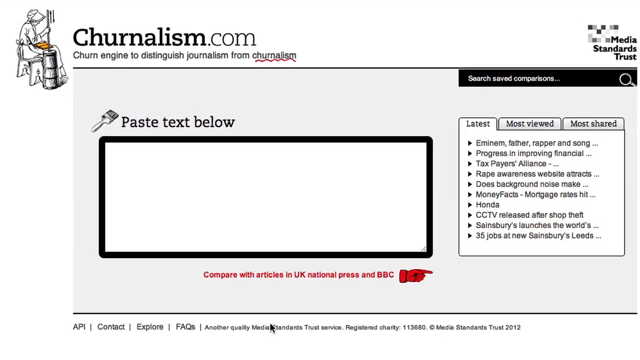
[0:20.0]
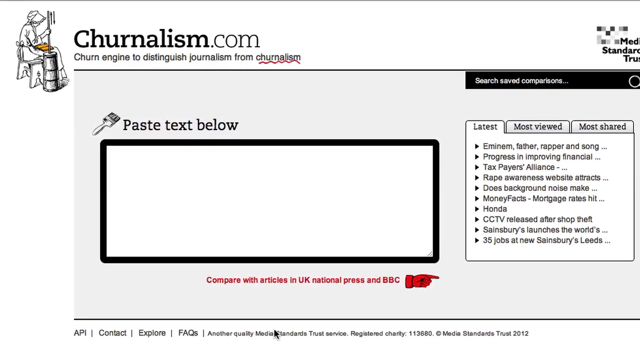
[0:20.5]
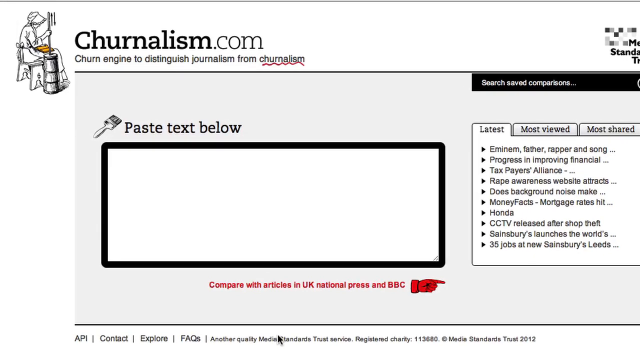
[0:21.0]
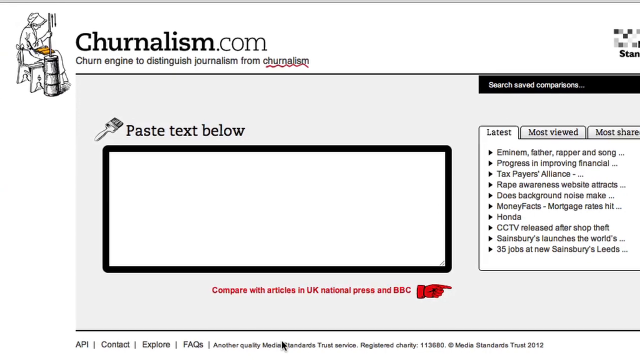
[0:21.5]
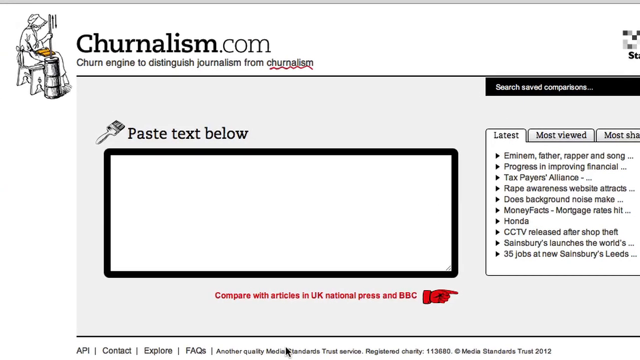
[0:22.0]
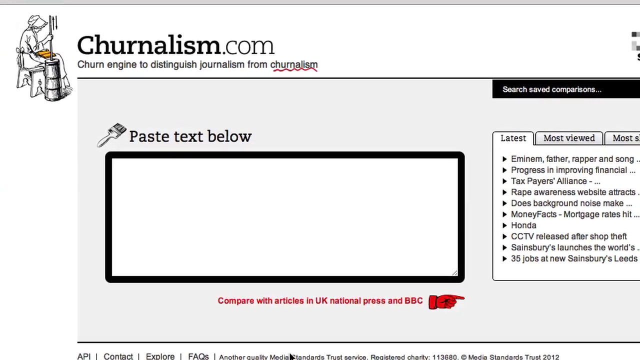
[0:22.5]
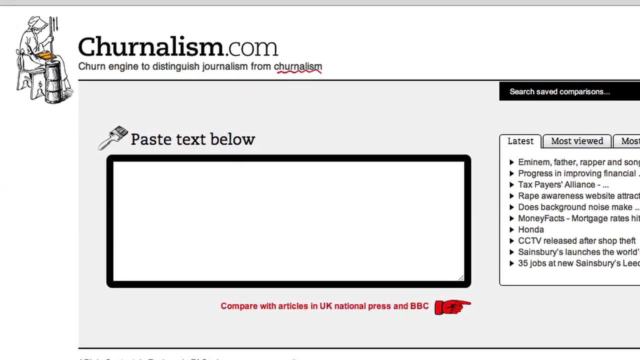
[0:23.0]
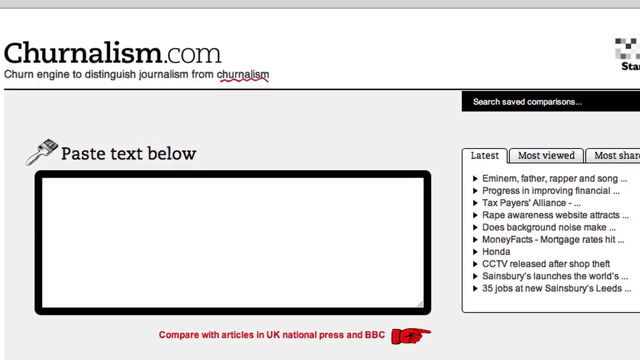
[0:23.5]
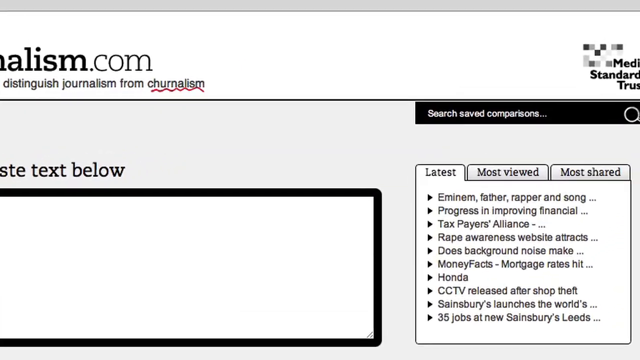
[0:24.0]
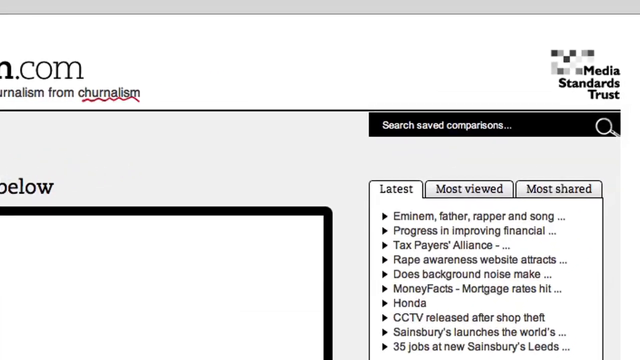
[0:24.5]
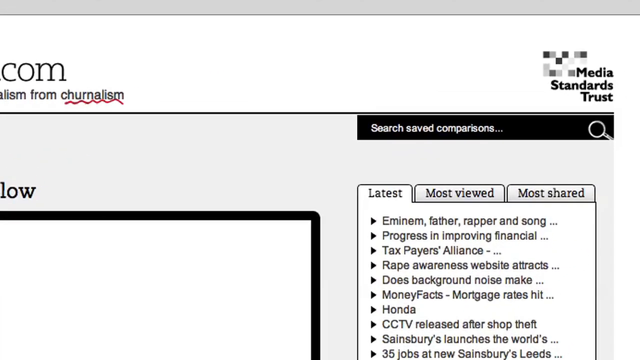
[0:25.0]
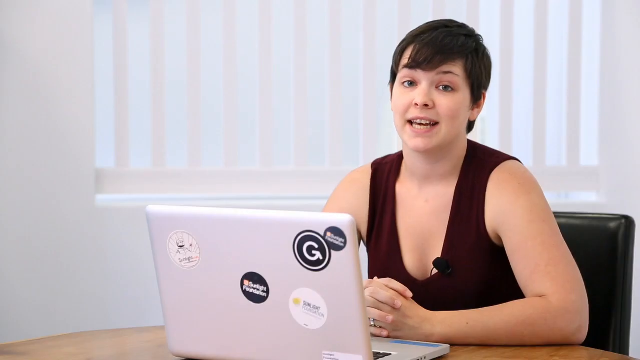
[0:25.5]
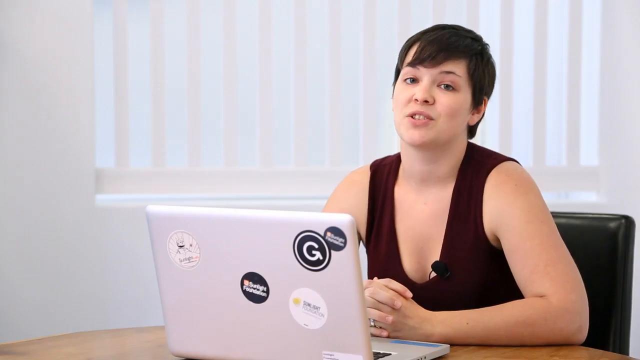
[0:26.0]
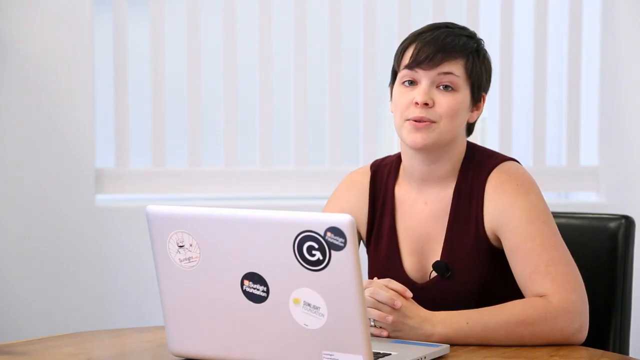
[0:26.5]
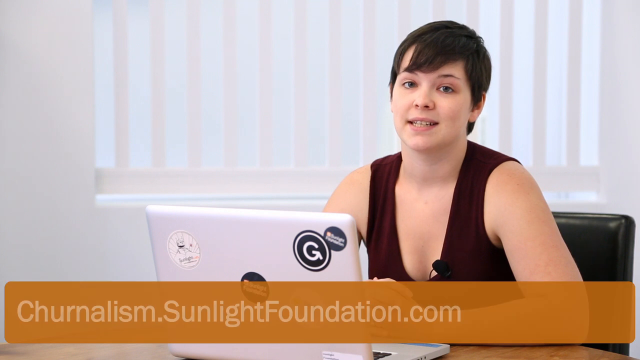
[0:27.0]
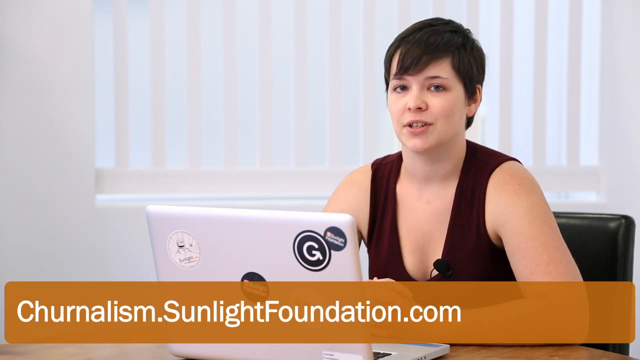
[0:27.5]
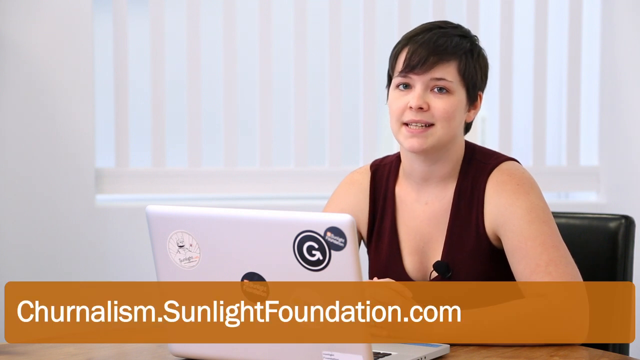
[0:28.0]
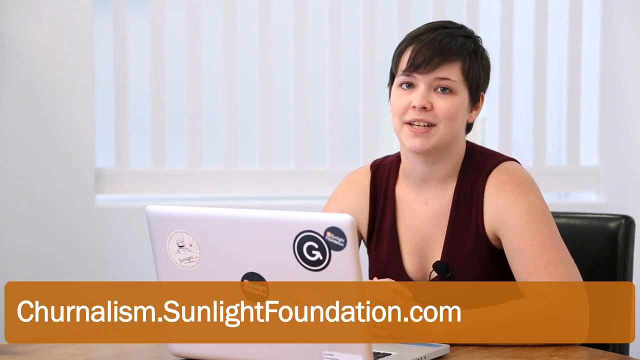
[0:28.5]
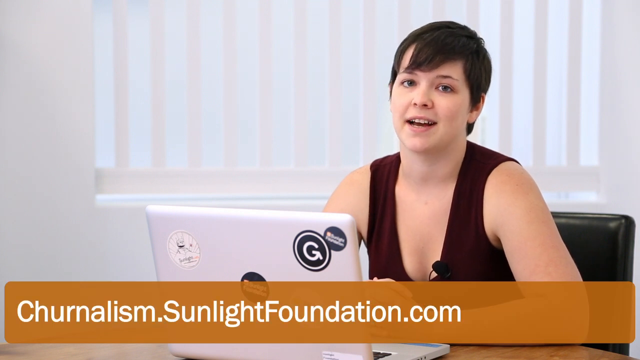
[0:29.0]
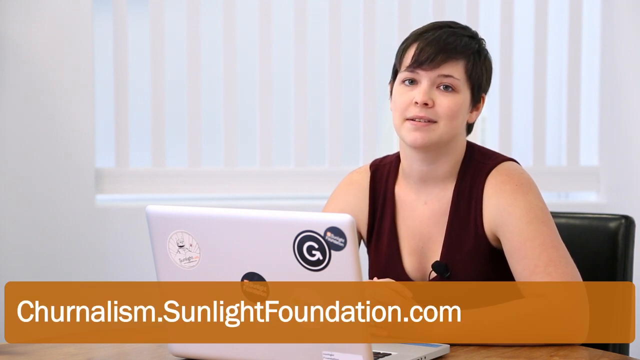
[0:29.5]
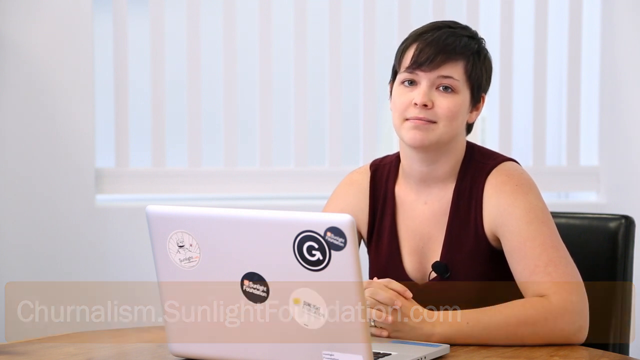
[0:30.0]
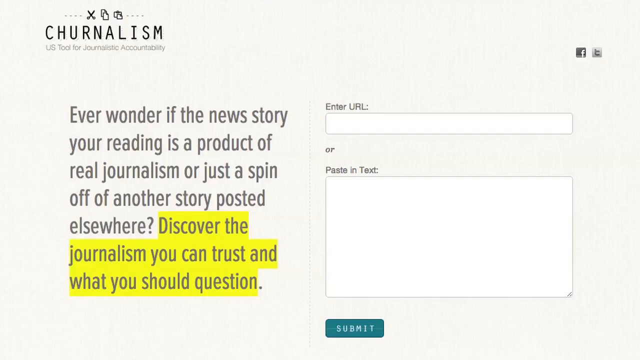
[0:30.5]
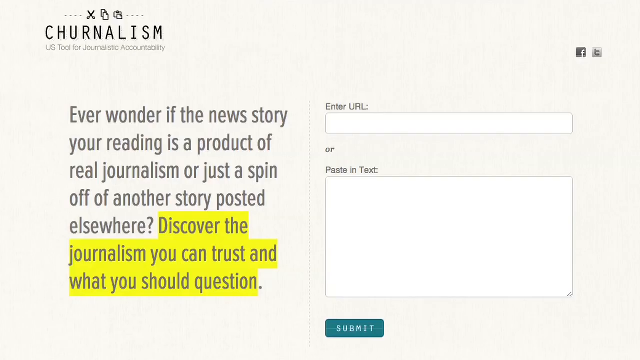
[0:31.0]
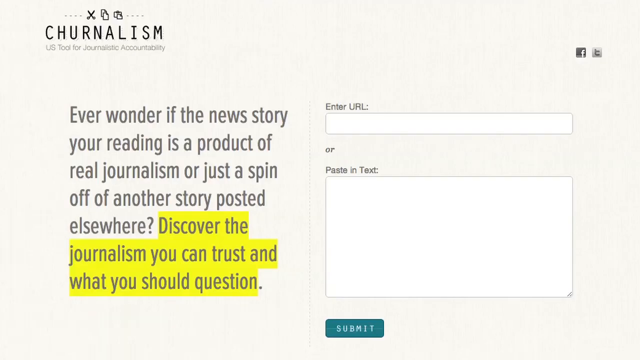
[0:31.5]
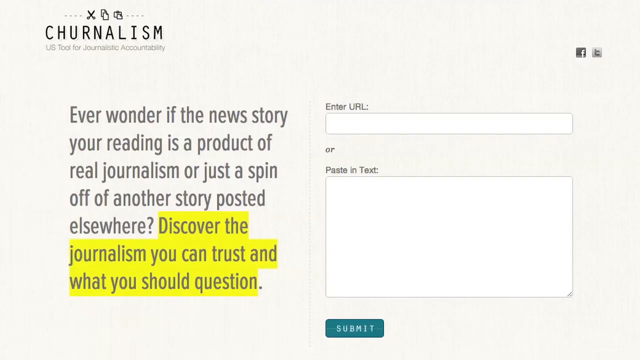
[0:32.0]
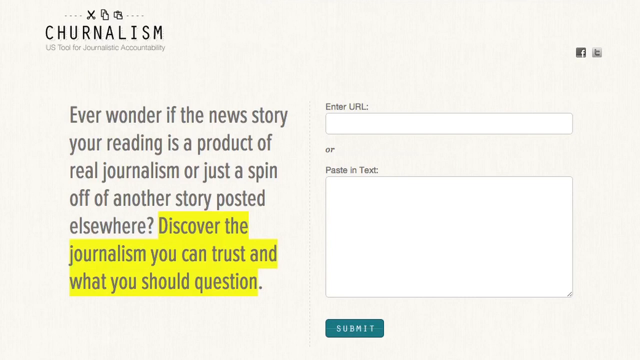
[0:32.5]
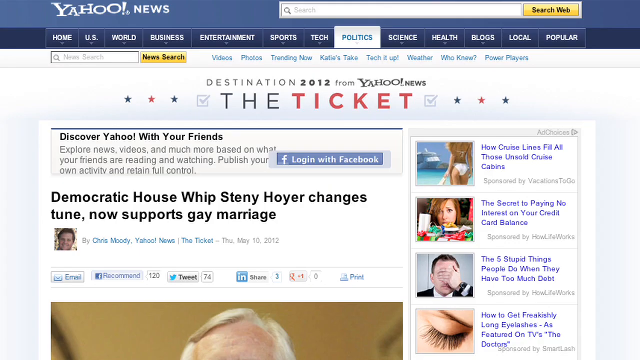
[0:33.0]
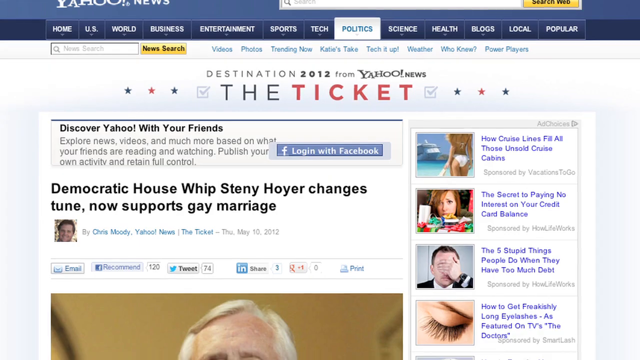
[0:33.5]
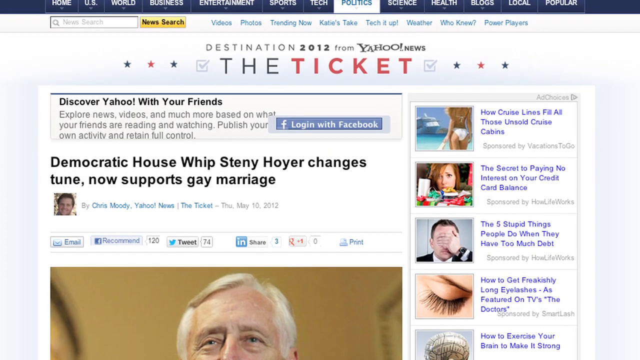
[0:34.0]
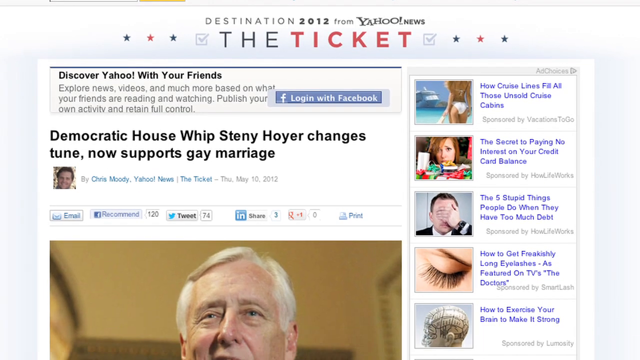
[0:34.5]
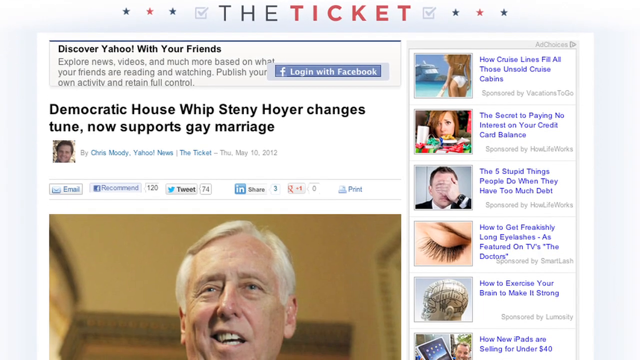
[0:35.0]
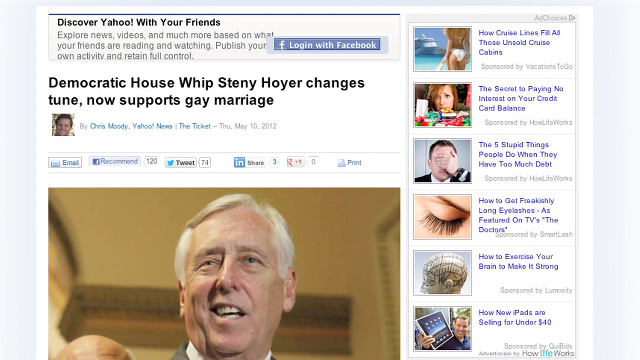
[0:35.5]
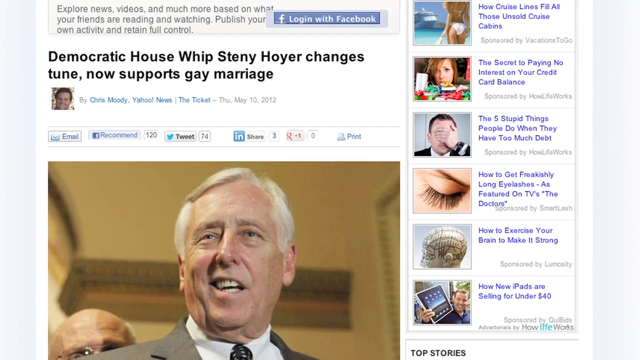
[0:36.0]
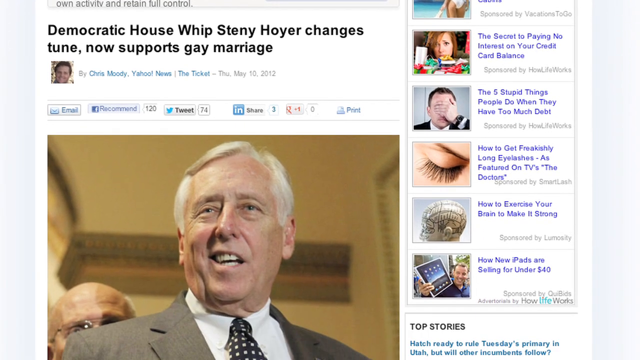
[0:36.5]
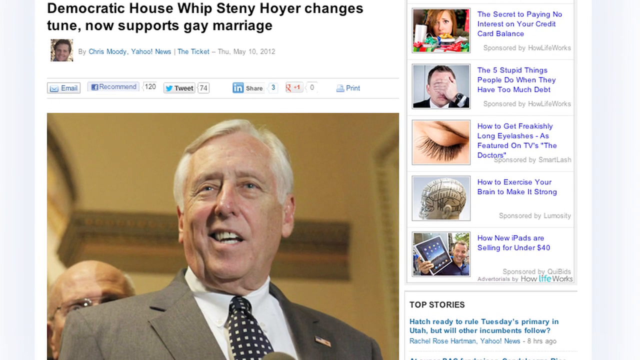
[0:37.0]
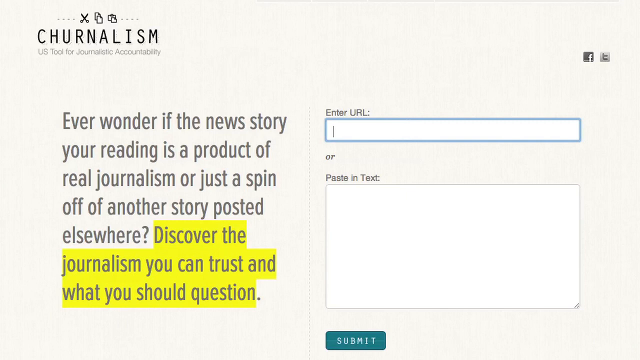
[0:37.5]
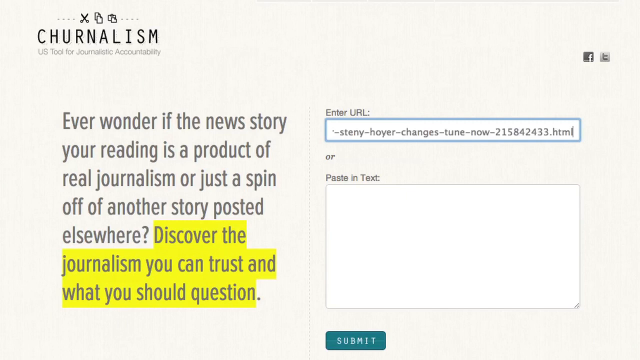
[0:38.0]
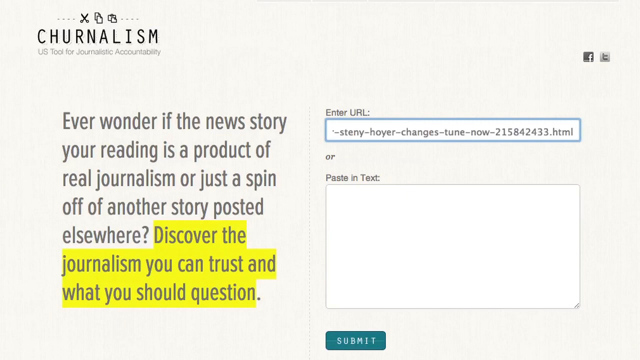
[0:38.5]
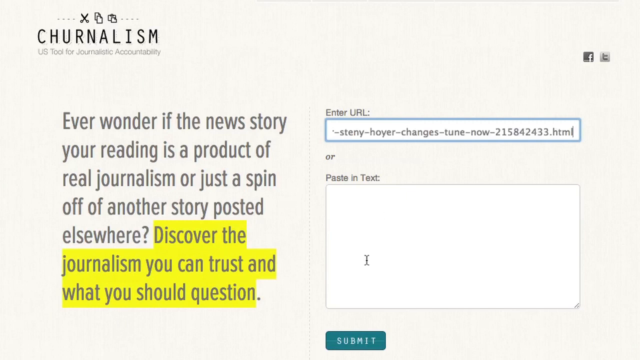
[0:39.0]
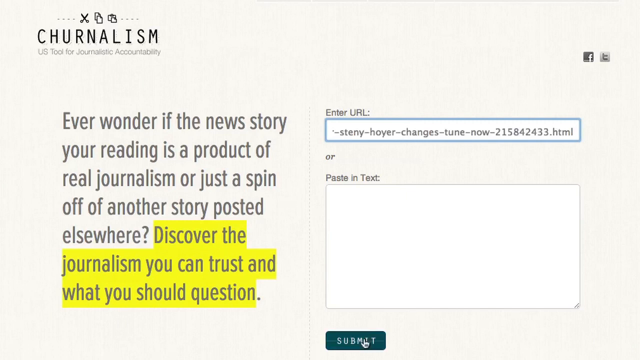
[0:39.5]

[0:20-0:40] A website says "journalism.com" and shows a small computer-style drawing of a person, apparently a female, seemingly churning butter. It says "churn engine to distinguish journalism from churnalism." Below that it says "paste text below," next to a brush that looks like a paintbrush, and then there is an empty rectangular window. Underneath is writing that says "compare with articles in UK, National Press and BBC," with an iconic red hand, apparently pointing to the right; all of that writing is in red. The camera pans toward "paste text below" and then over to the other corner on the right. The lady is seen again sitting at the table and speaking, with a banner below her that says "churnalism.sunlightfoundation.com." Another webpage appears, and then the view pans over to a Yahoo page with information and a large picture of a white man in a suit and tie, smiling or gesturing a bit.